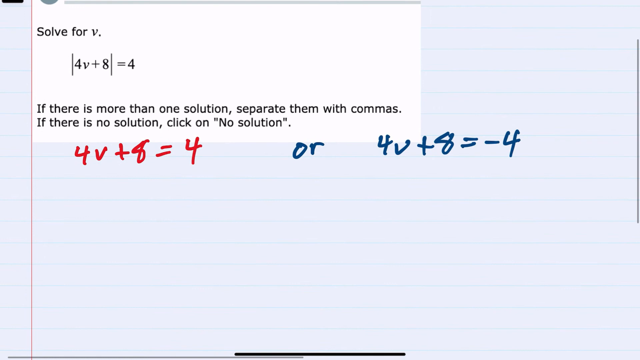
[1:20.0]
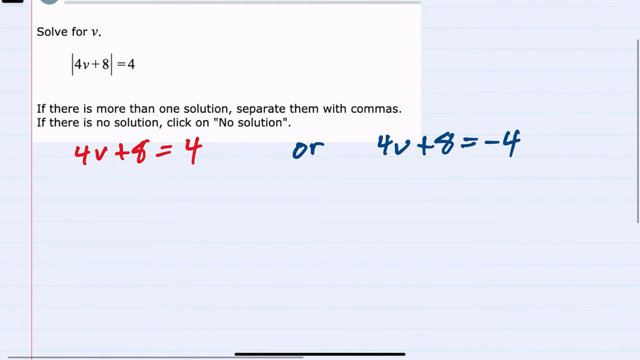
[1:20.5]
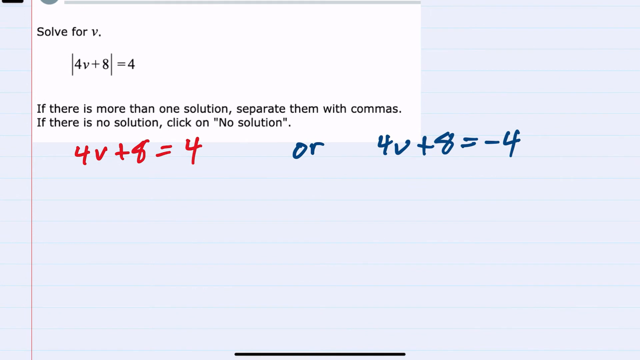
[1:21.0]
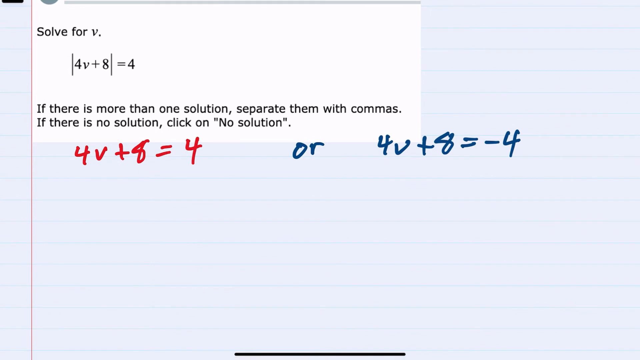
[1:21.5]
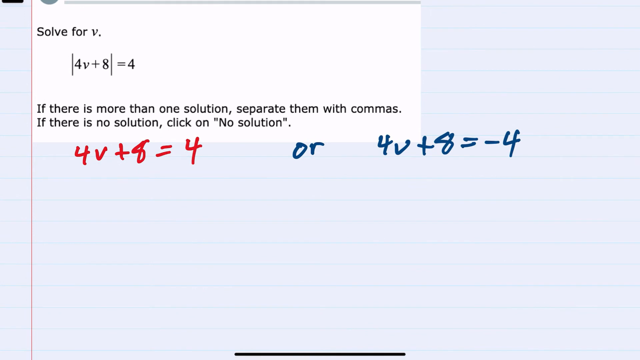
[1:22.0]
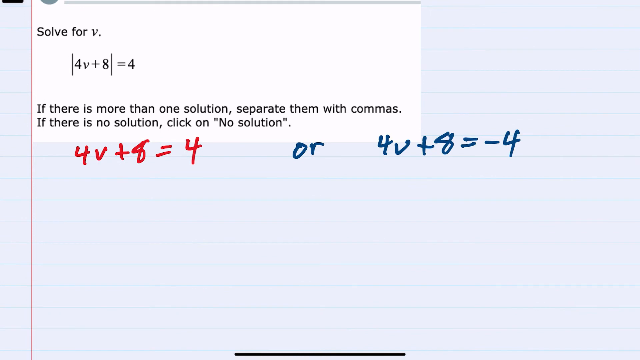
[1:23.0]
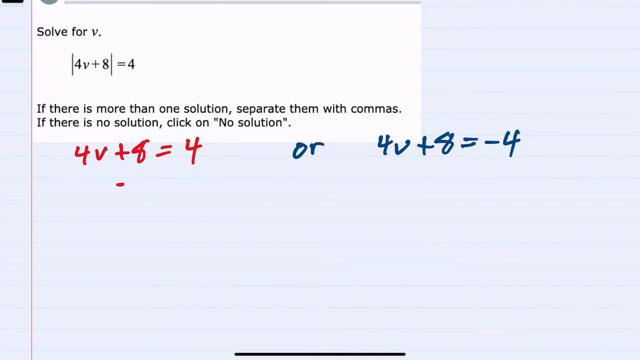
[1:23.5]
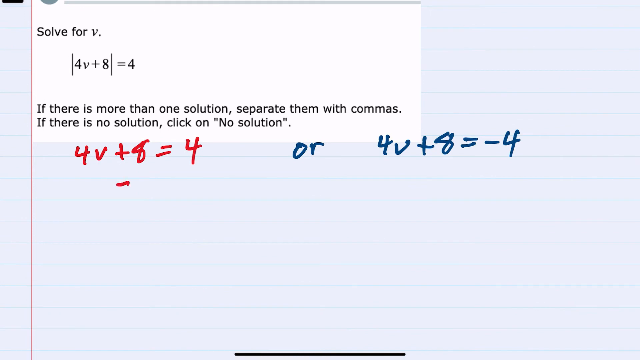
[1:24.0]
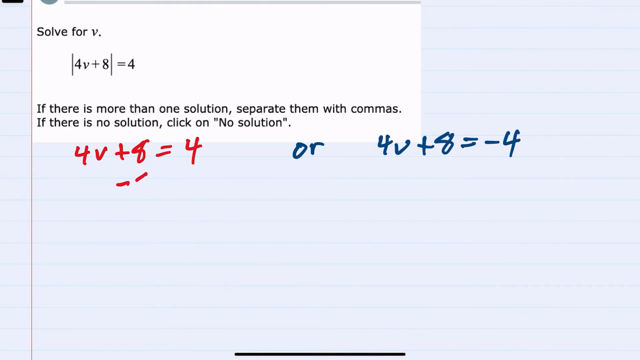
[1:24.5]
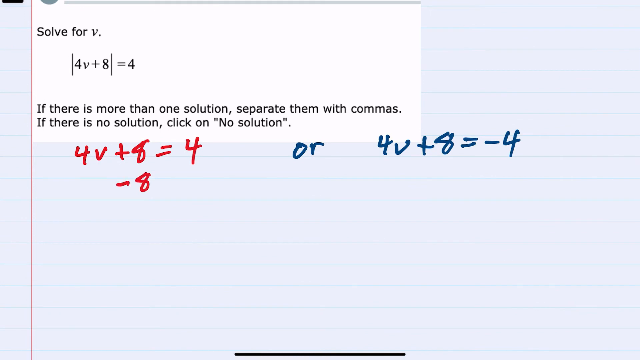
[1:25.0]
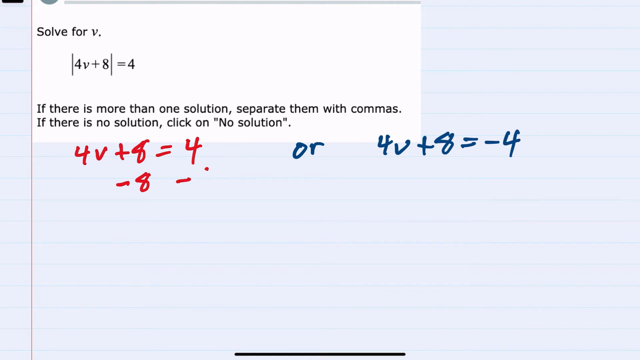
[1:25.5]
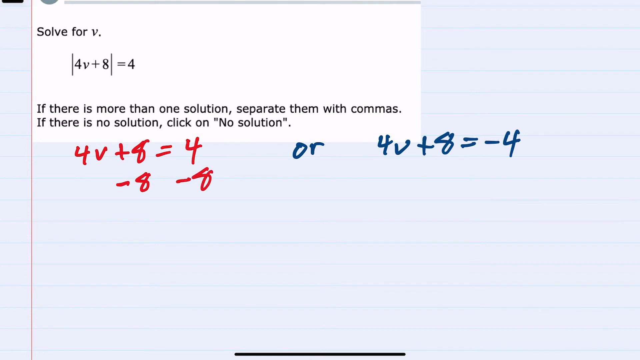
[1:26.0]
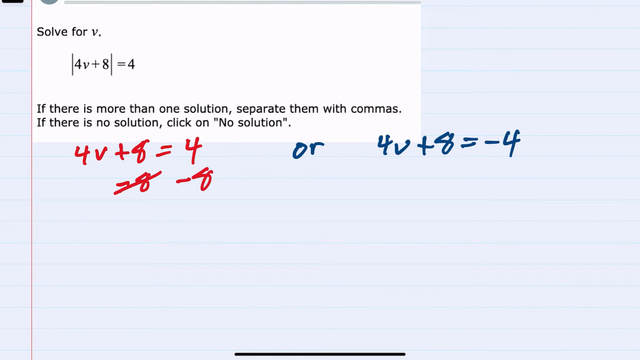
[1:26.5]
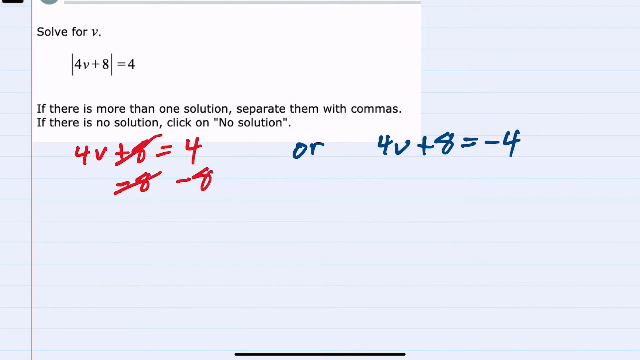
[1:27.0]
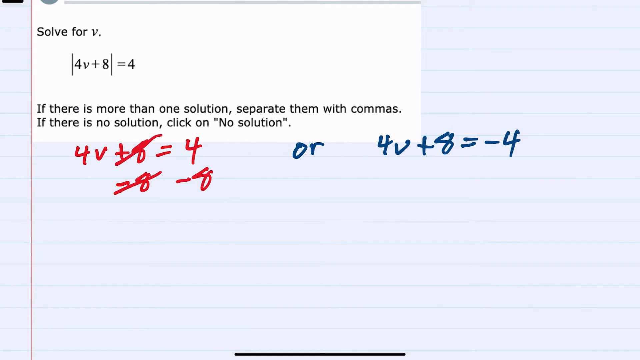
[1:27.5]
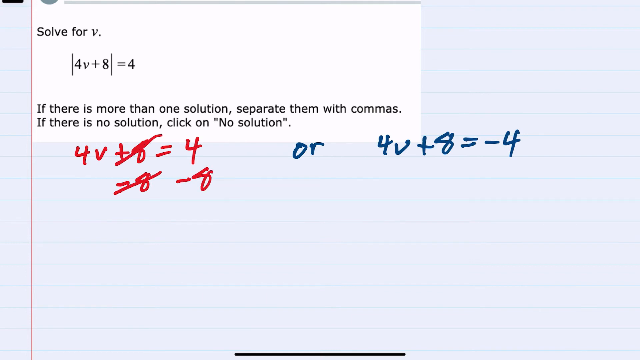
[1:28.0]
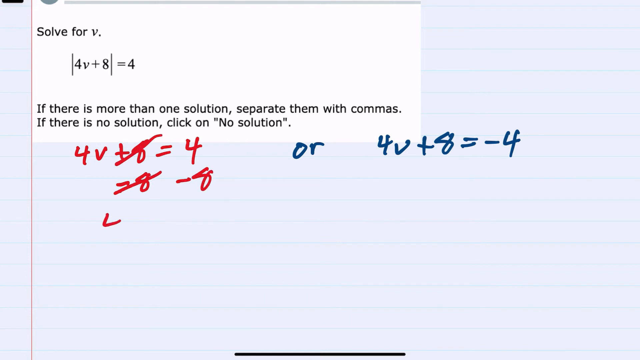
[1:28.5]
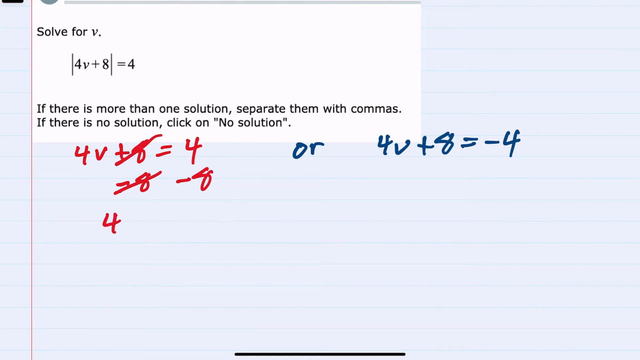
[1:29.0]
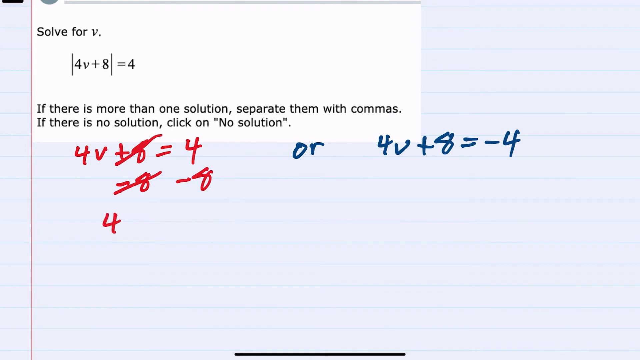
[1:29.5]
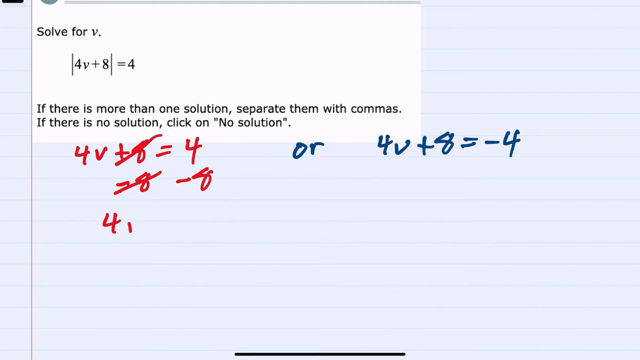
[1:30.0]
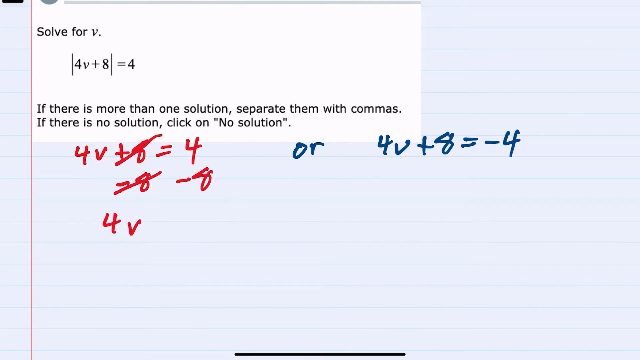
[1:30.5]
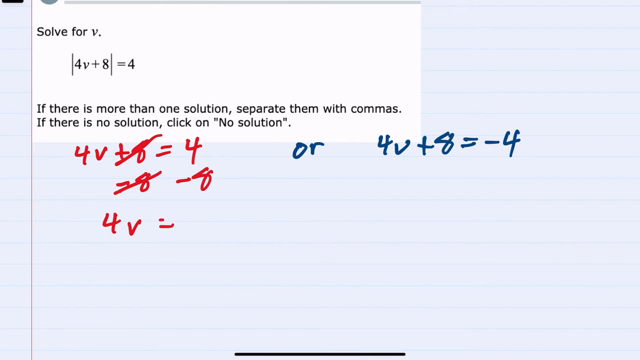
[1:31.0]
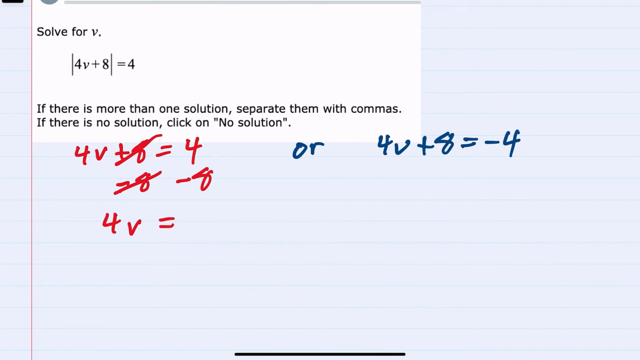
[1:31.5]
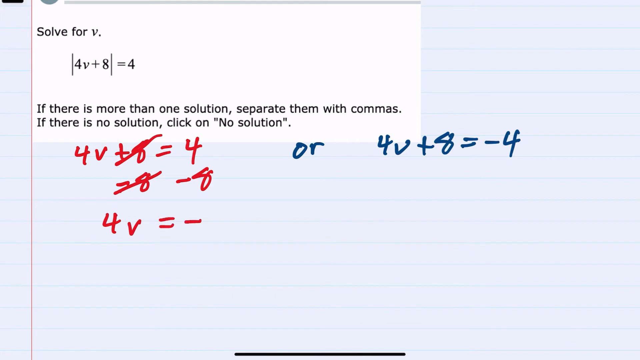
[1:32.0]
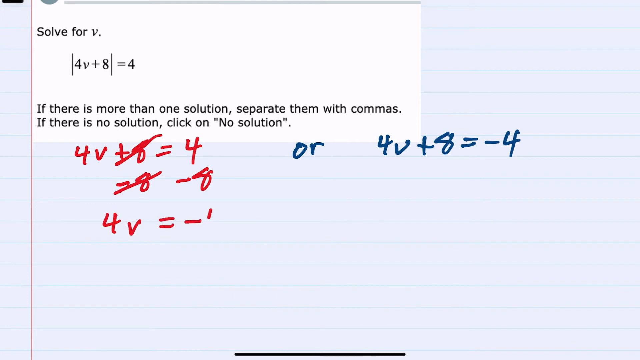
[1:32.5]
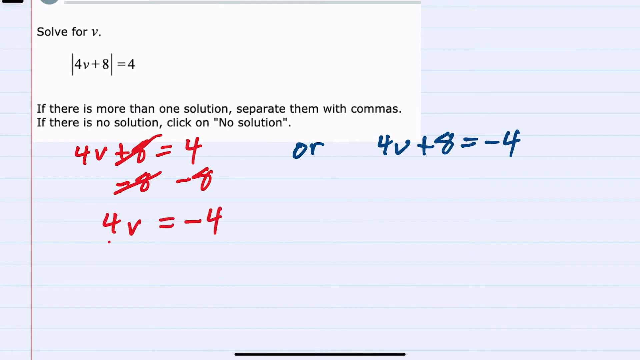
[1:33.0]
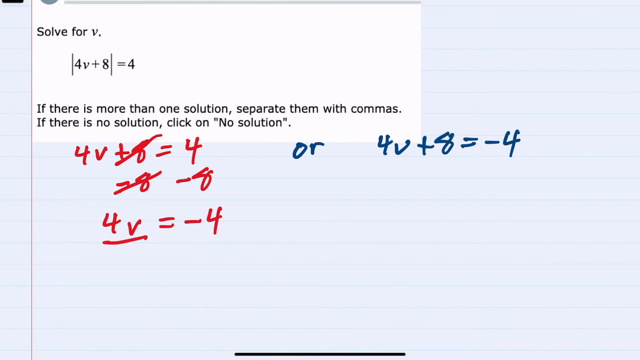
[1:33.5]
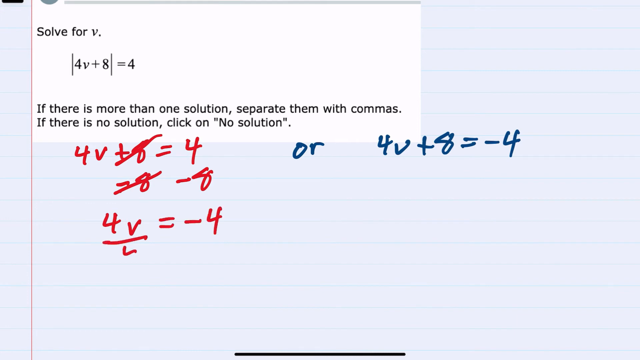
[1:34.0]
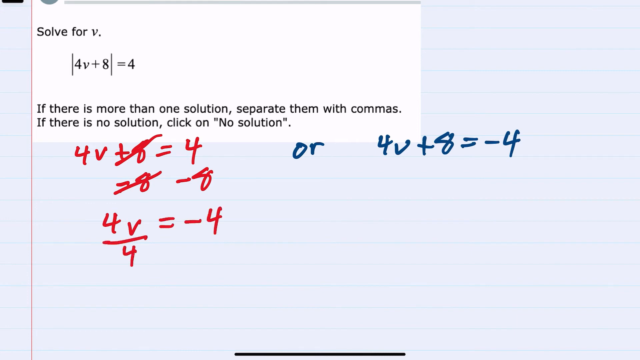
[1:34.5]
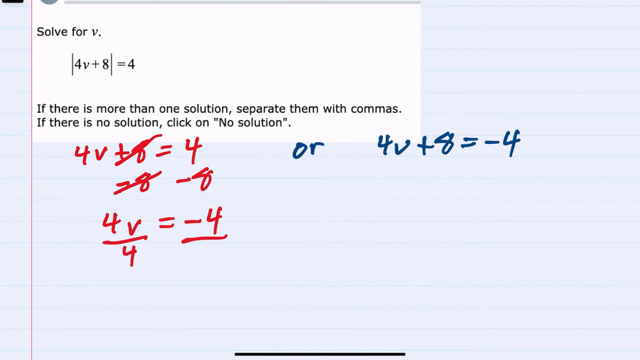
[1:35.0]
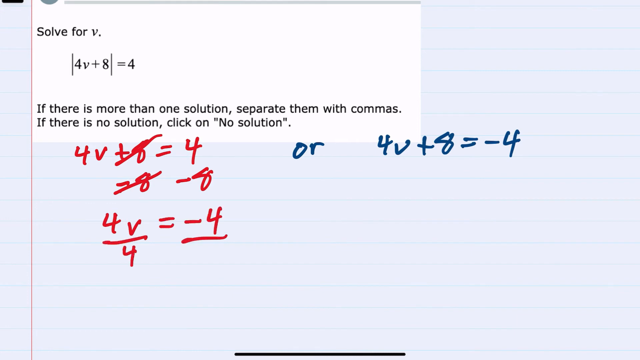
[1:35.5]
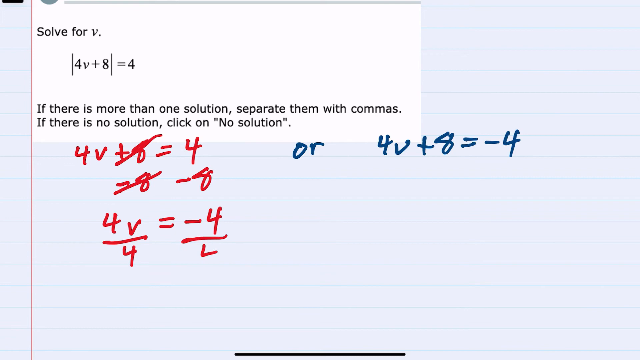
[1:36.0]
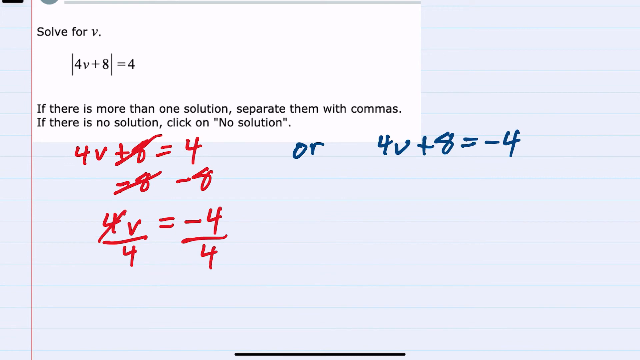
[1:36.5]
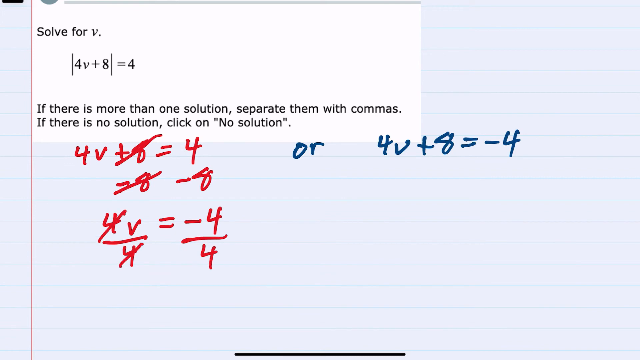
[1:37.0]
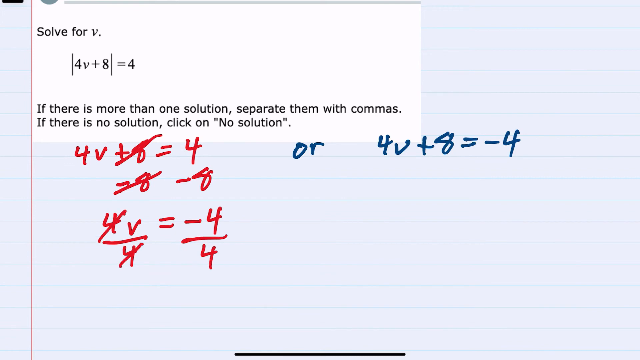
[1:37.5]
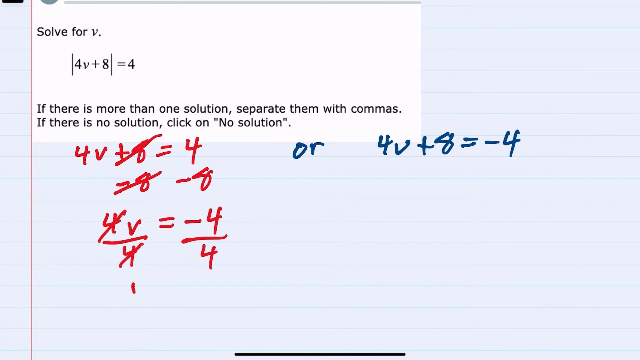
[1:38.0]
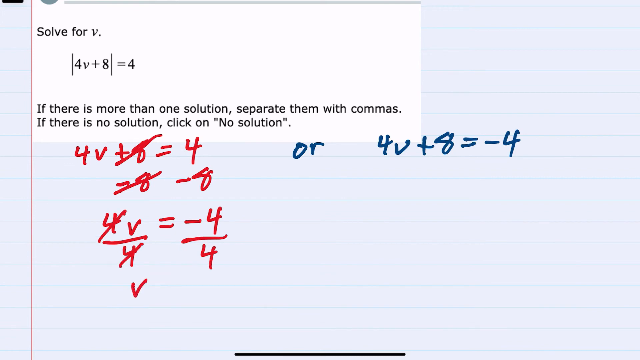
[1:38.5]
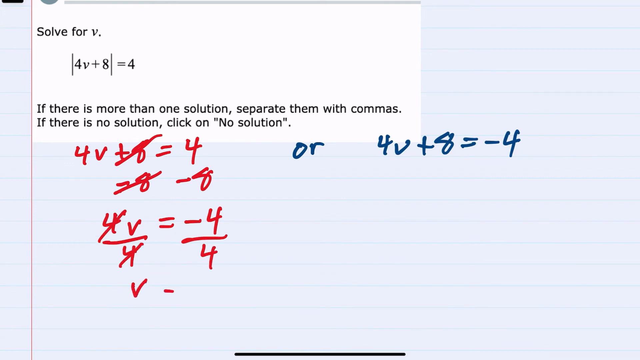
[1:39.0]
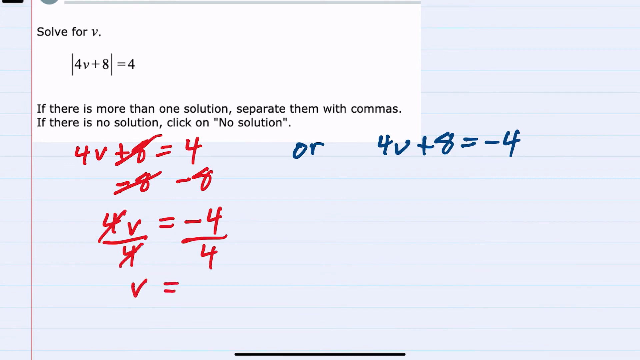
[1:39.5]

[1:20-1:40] The image of a piece of paper has an overlay at the top asking to solve 4v + 8 = 4. Underneath, the instructions read "if there is more than one solution separate them with commas. If there is no solution click on no solution", and below that "4v + 8 = 4 or 4v + 8 = -4" is already written. The author then works through why these do not work out for the equation. A check mark comes up on one side, but it does not equal the other side: one is a positive 4 and the other a negative 4.